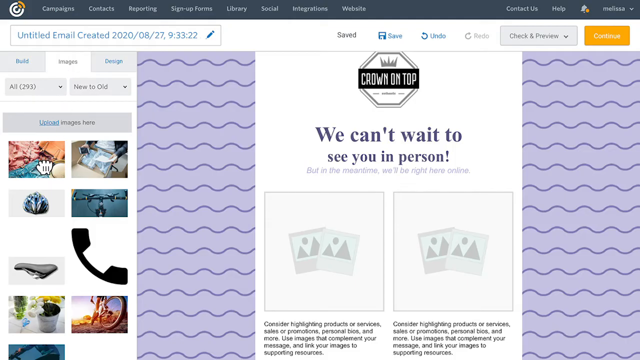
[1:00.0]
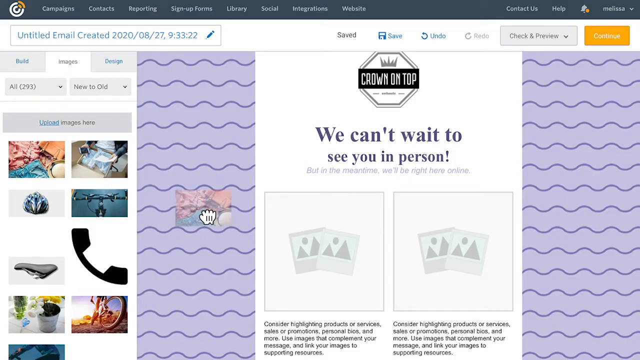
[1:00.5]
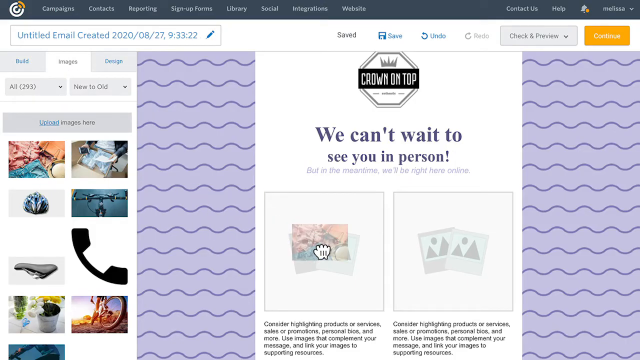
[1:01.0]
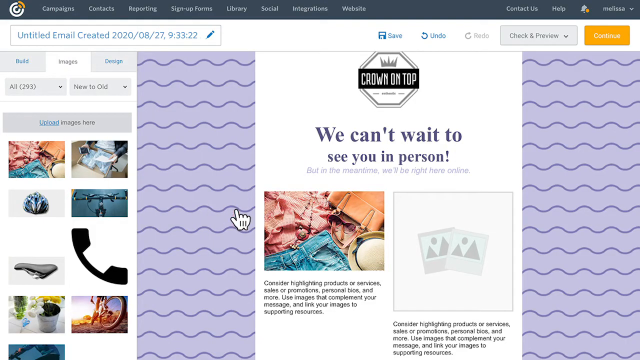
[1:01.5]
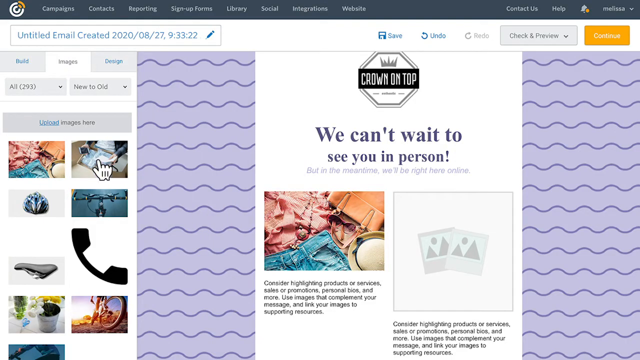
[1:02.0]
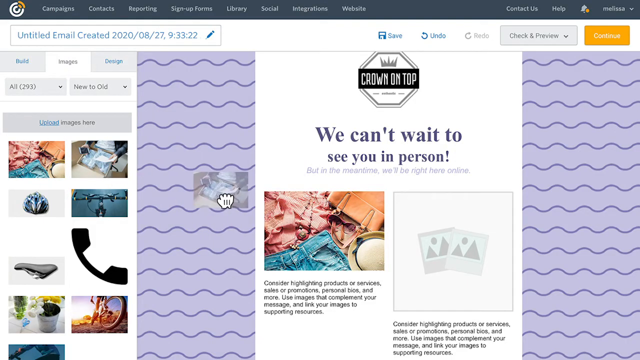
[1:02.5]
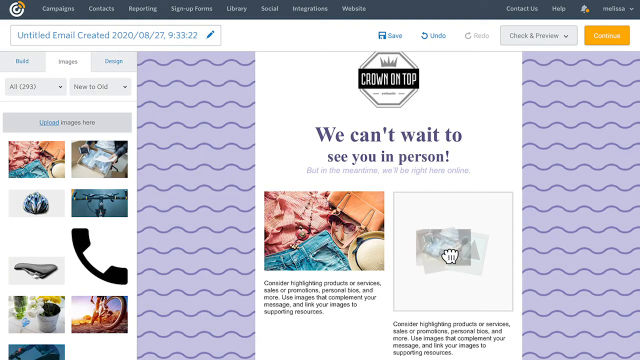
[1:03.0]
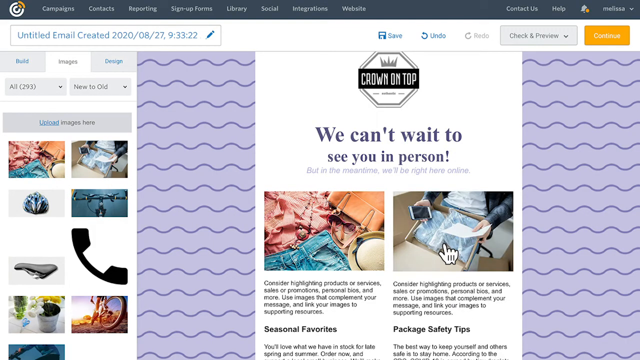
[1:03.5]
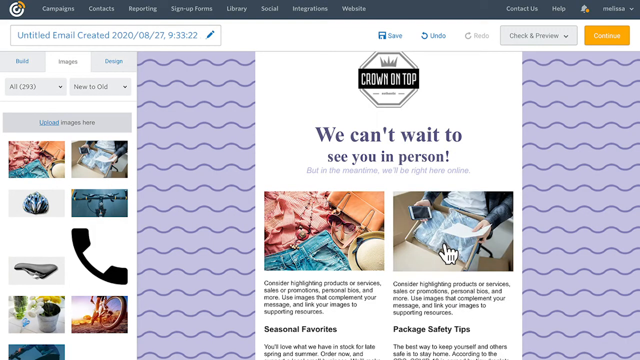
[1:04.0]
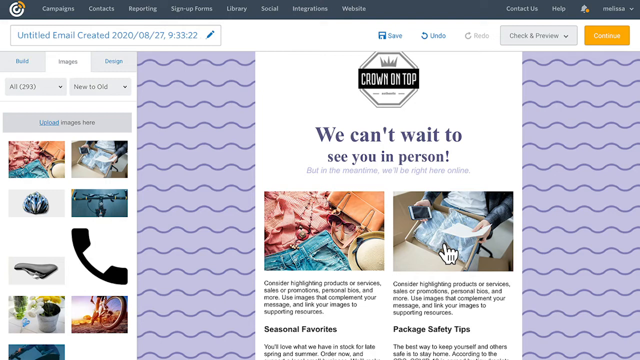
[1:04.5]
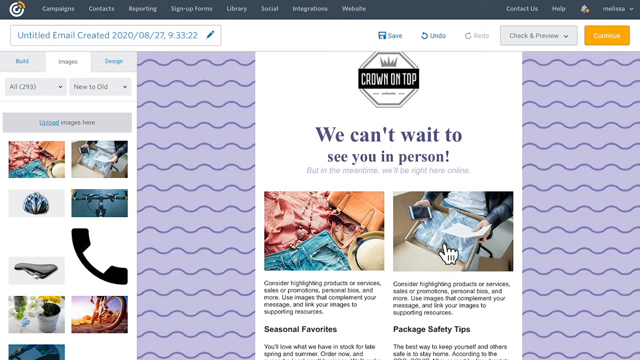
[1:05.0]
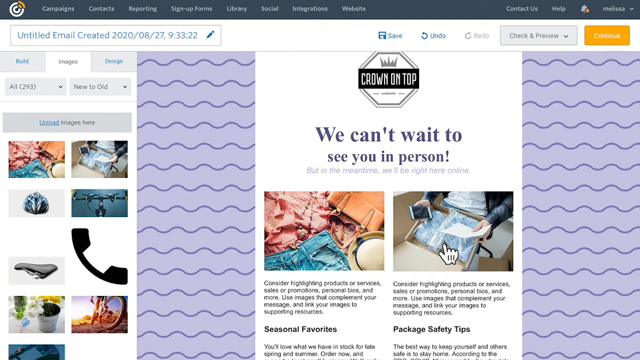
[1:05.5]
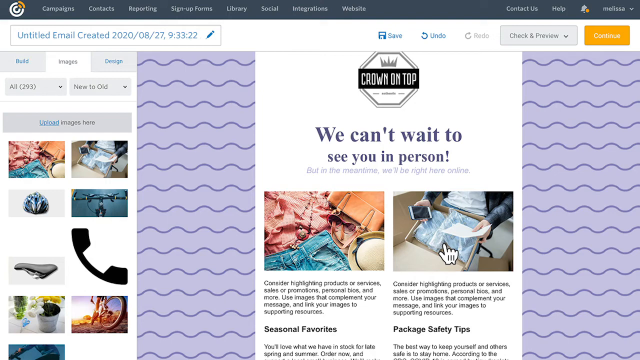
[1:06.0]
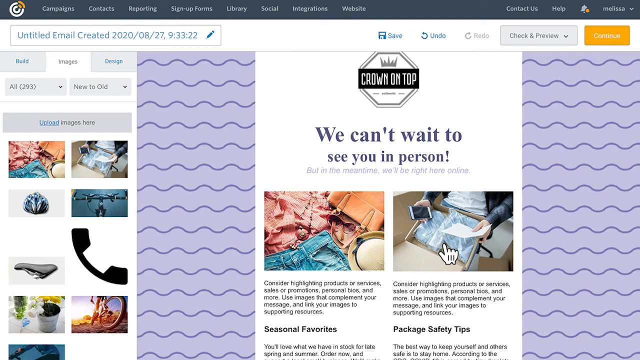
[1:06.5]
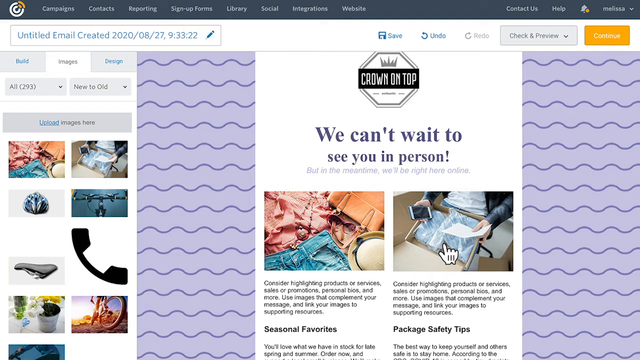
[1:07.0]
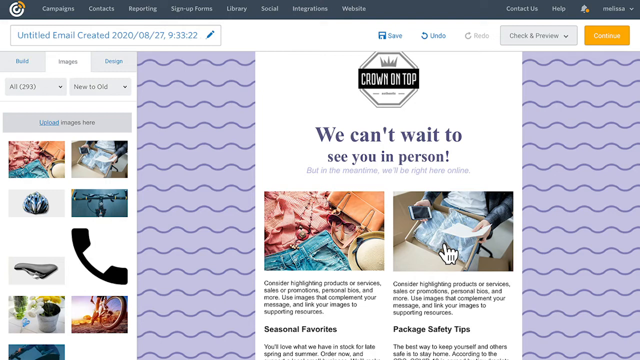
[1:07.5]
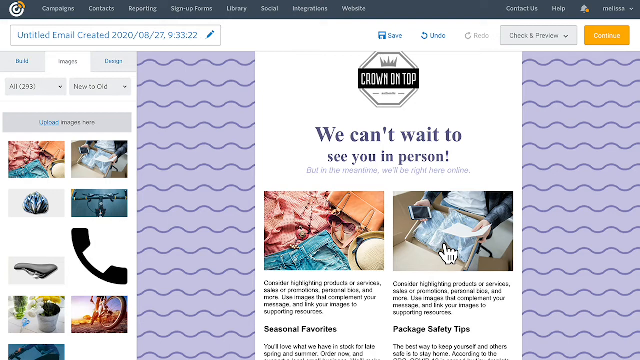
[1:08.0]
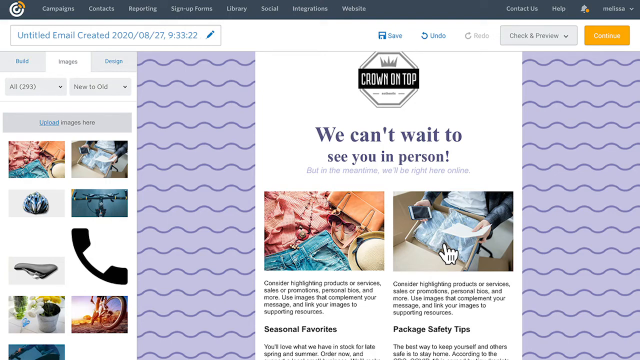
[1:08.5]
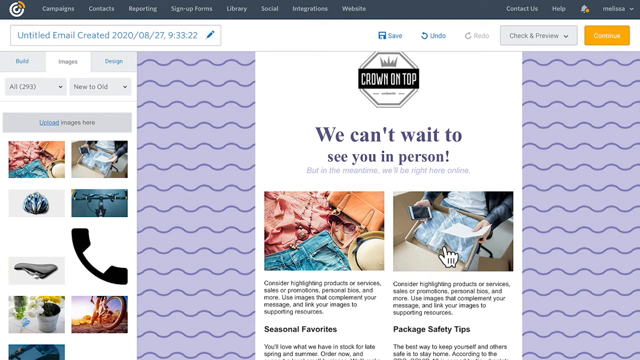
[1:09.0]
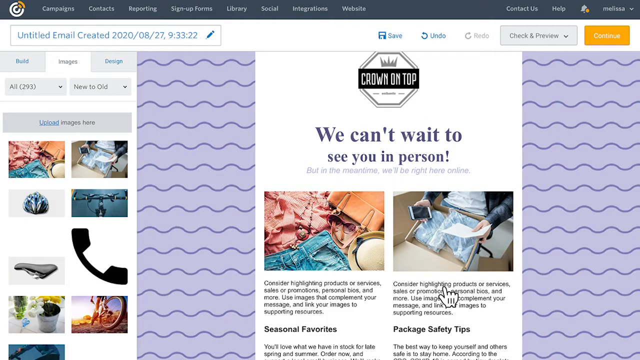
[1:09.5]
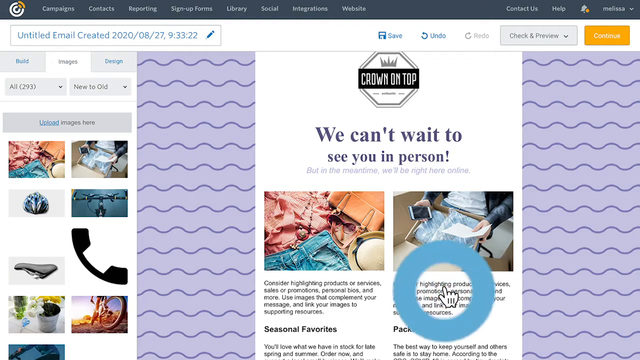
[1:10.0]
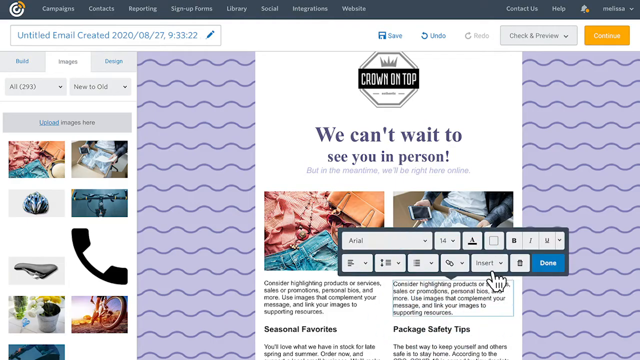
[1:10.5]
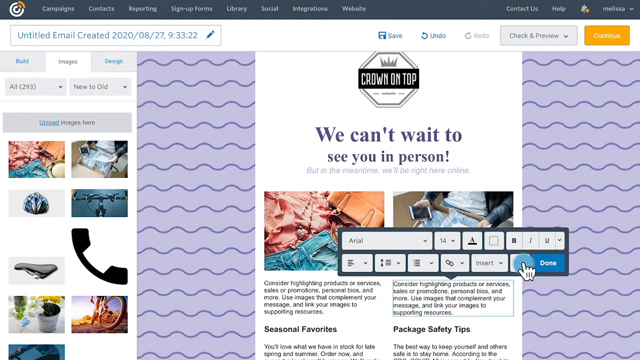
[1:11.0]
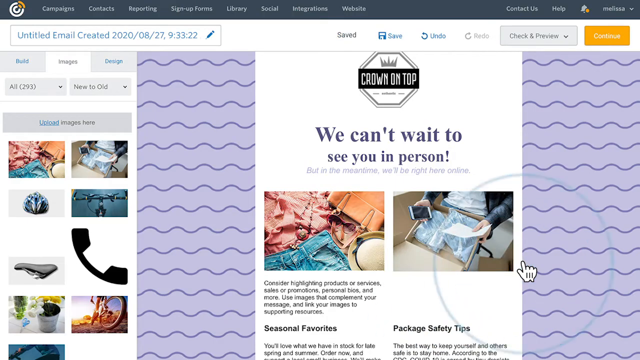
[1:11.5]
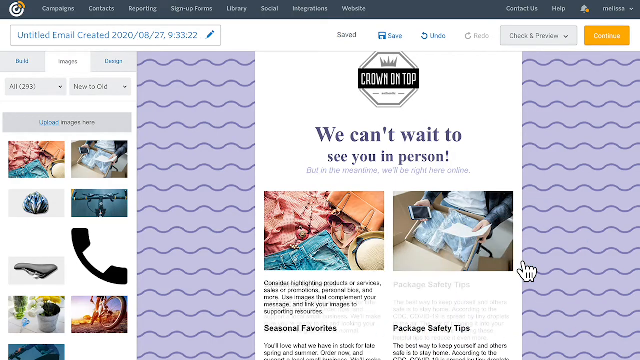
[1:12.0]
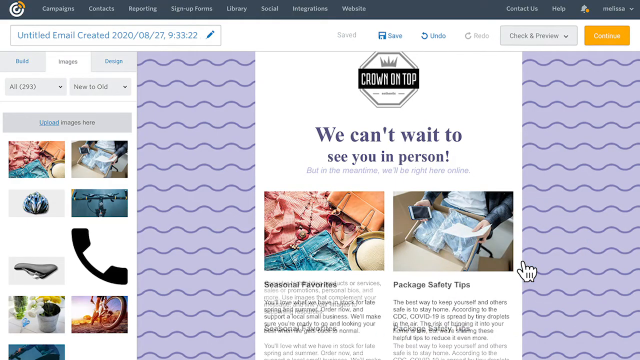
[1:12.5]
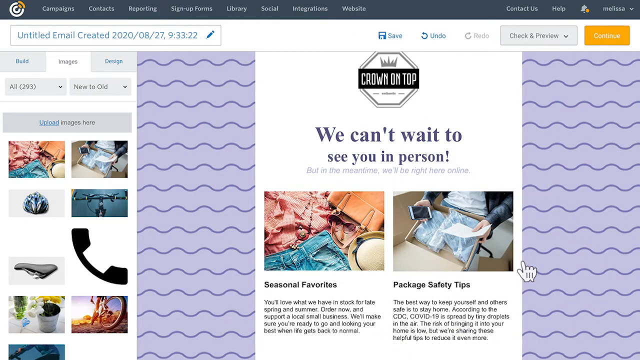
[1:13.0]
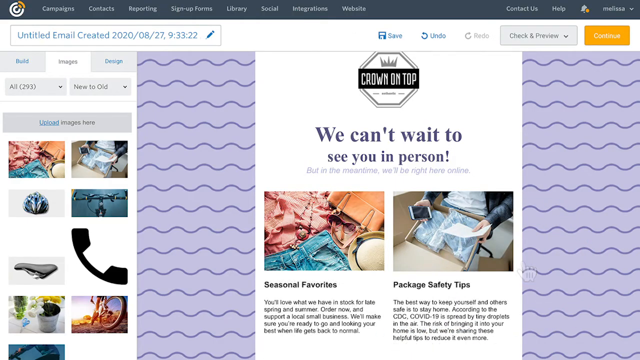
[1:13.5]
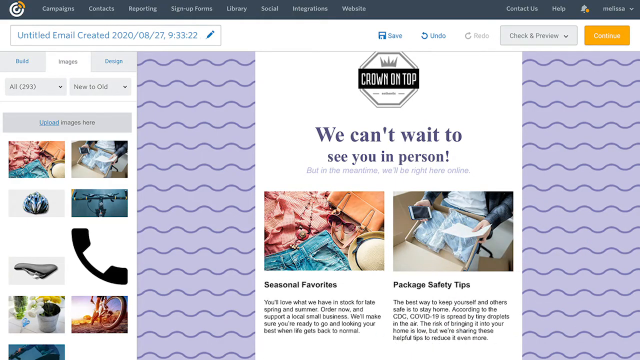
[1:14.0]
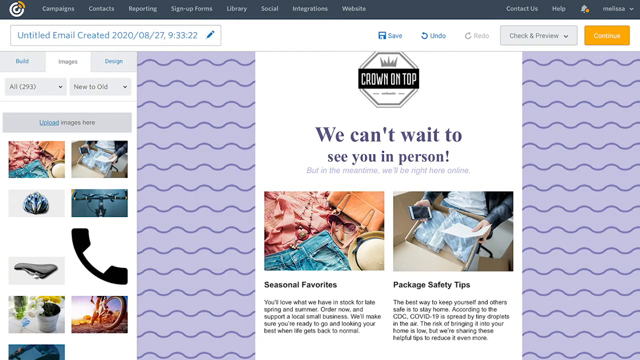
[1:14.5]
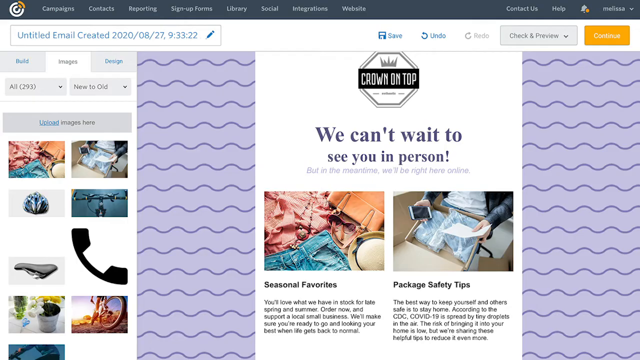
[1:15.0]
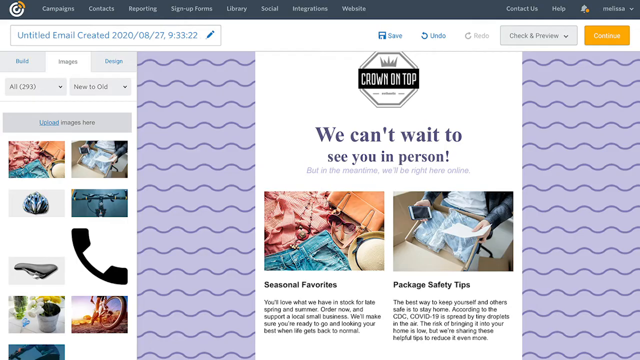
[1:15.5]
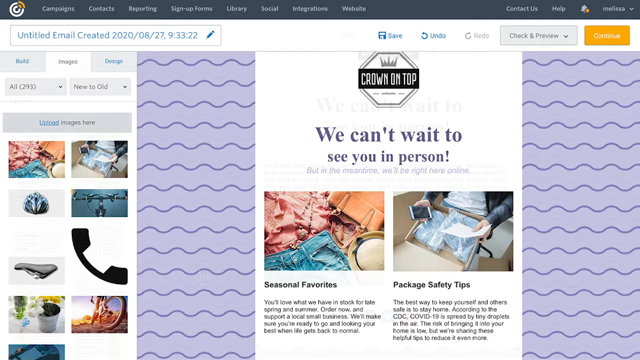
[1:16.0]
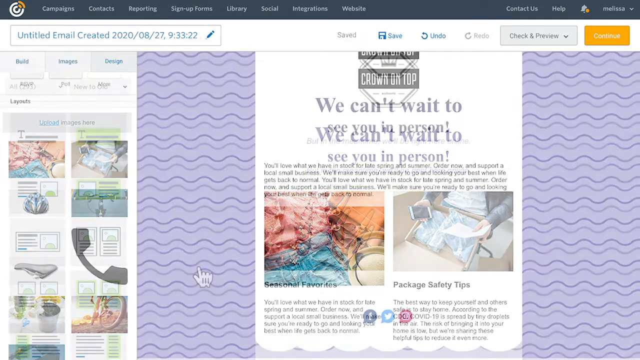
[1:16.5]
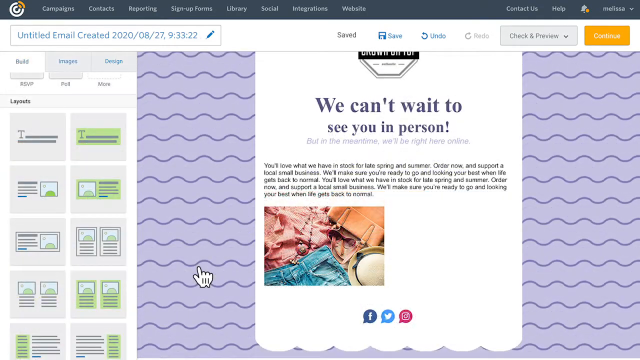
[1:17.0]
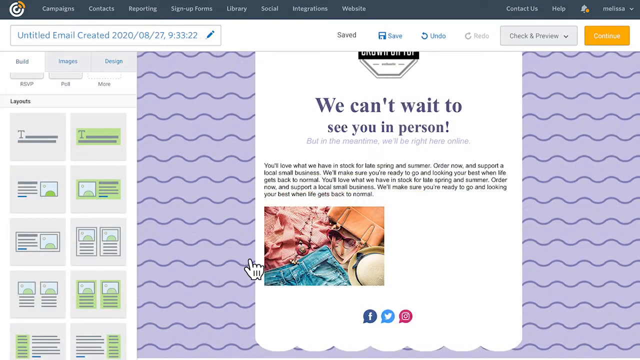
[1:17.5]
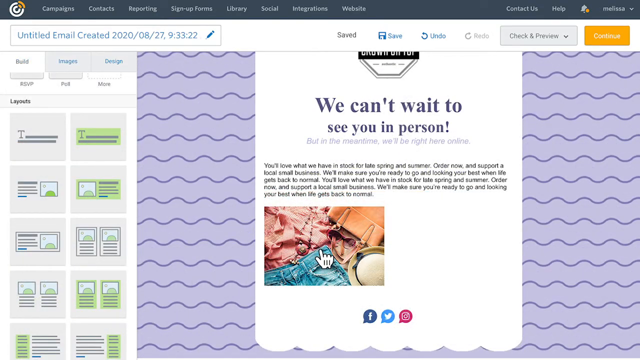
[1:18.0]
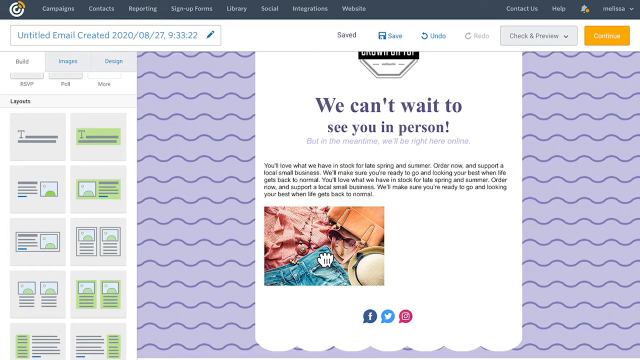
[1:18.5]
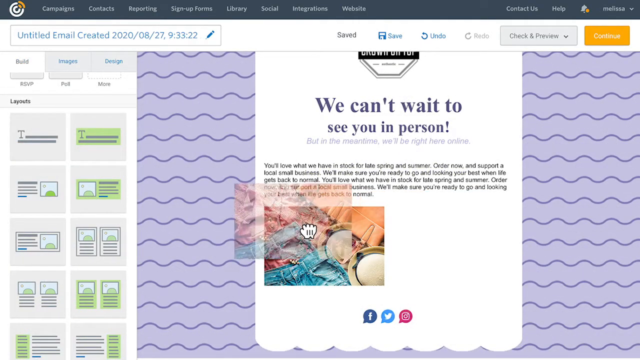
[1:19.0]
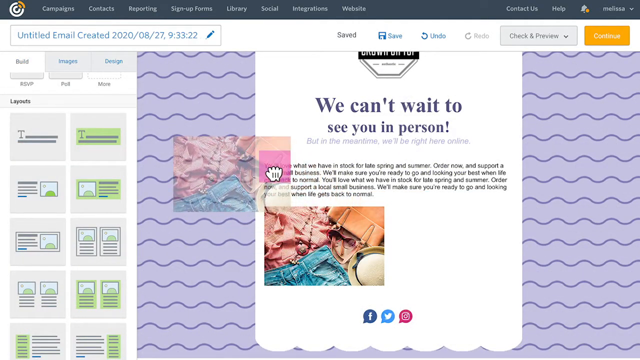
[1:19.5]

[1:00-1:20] The images are still there. The cursor goes back to the tabs on the left-hand side: having been in the build tab, it is now in the images tab, which shows a number of what look like stock photos to select, along with the option to upload one's own. One is clicked and dragged into the placeholders, one for each column. Below the photos in the body of the email is generic placeholder text copied from the template, reading "consider highlighting products or services, sales or promotions, personal bios, and more. Use images that complement your message and link your images to supporting resources." The same text appears in both columns, and it is then deleted, leaving the Seasonal Favorites and Package Safety Tips copy underneath.